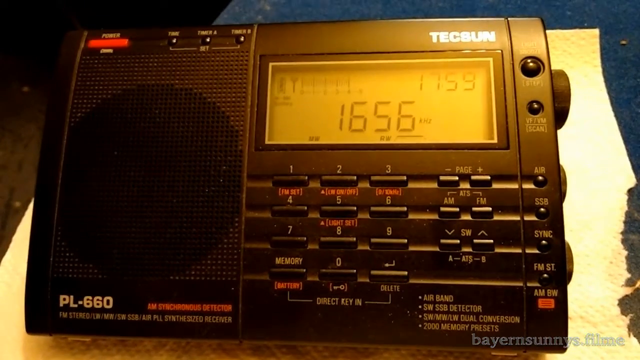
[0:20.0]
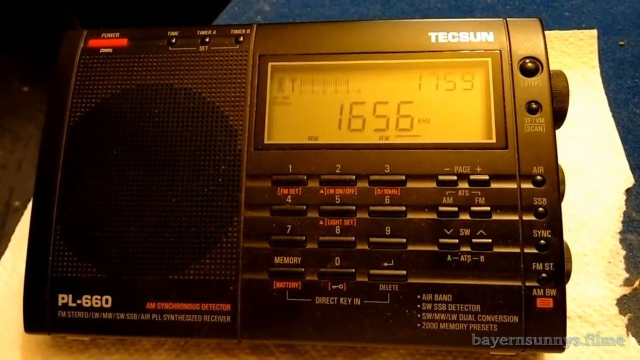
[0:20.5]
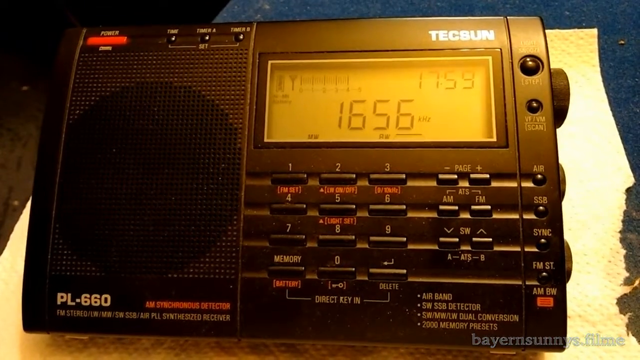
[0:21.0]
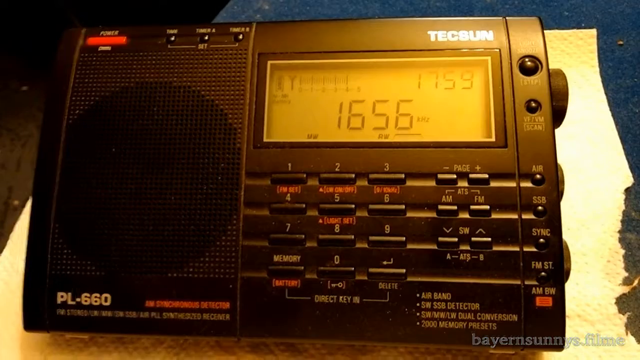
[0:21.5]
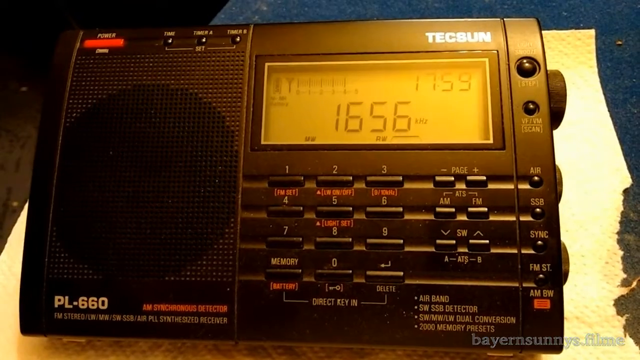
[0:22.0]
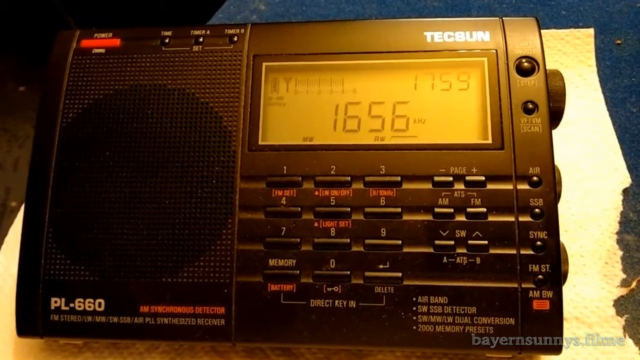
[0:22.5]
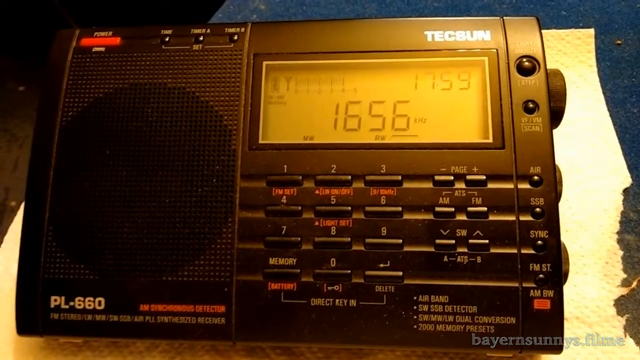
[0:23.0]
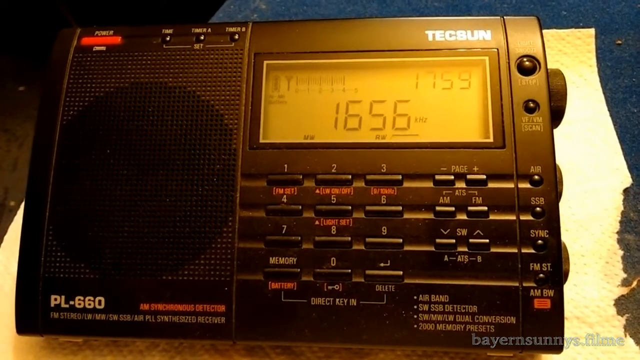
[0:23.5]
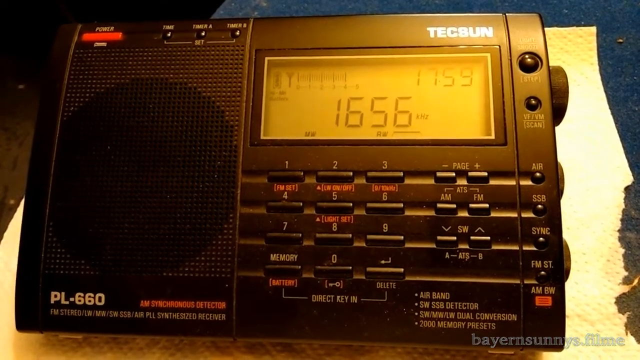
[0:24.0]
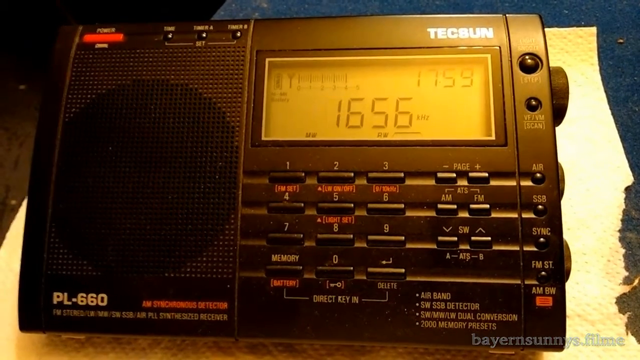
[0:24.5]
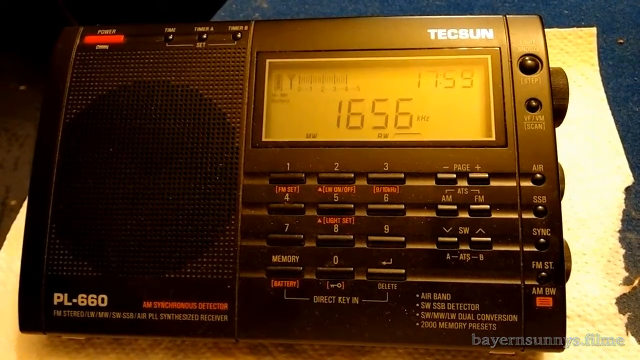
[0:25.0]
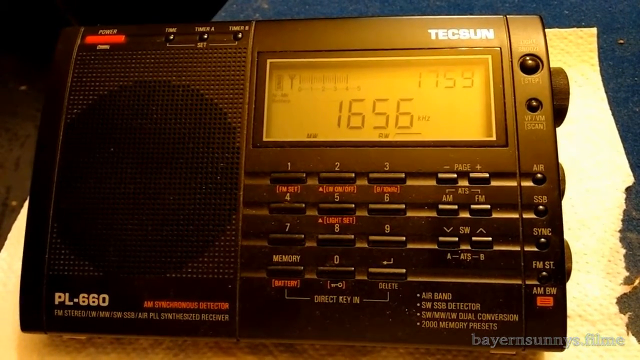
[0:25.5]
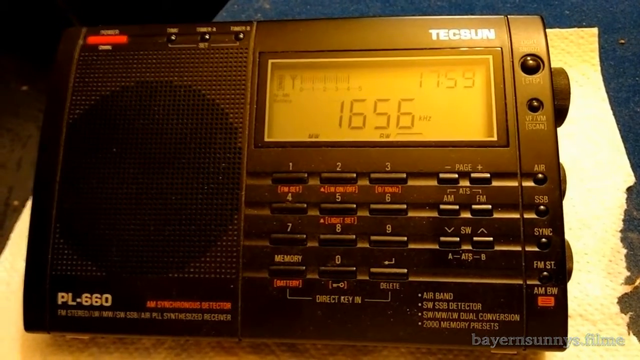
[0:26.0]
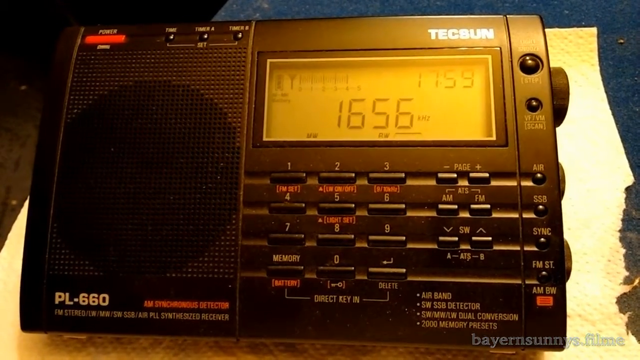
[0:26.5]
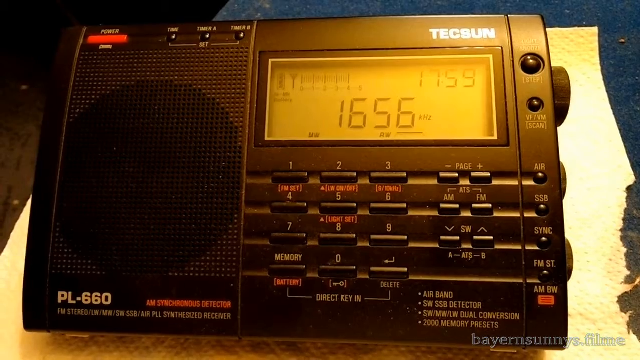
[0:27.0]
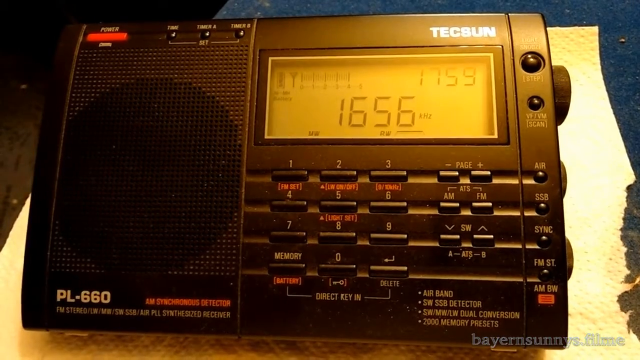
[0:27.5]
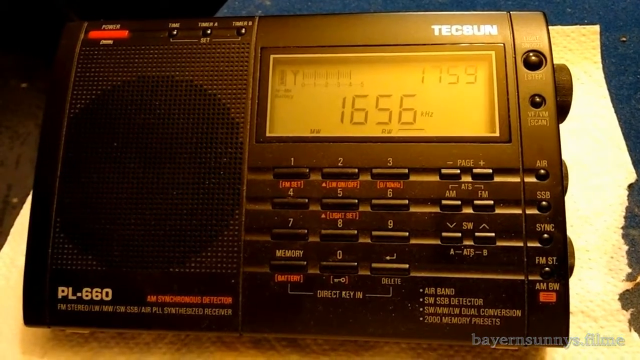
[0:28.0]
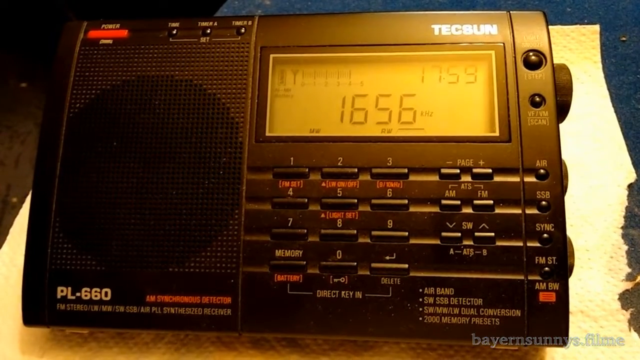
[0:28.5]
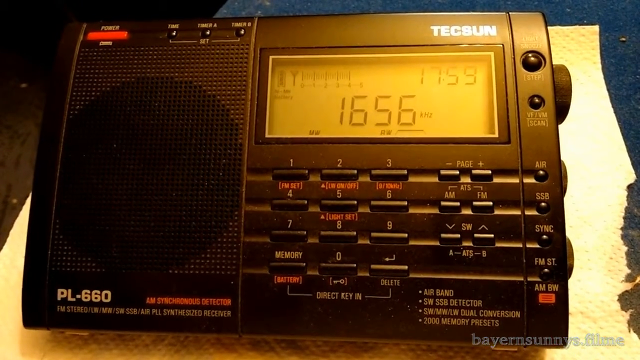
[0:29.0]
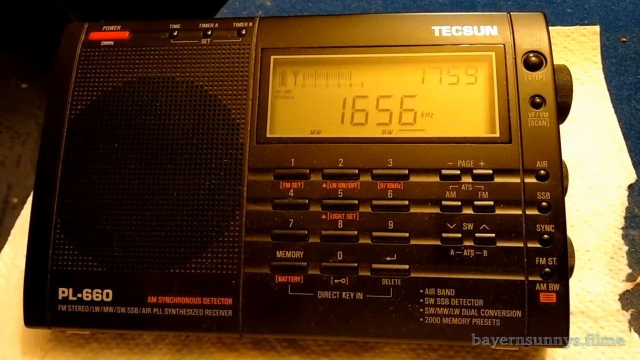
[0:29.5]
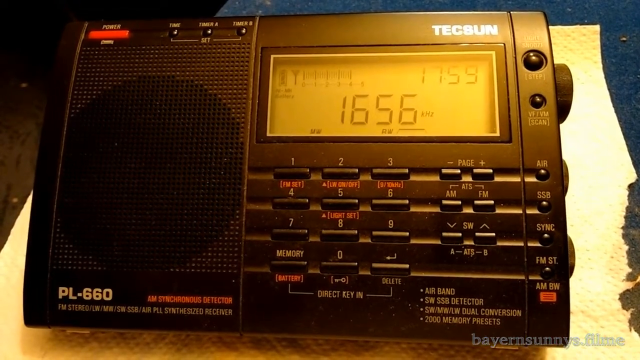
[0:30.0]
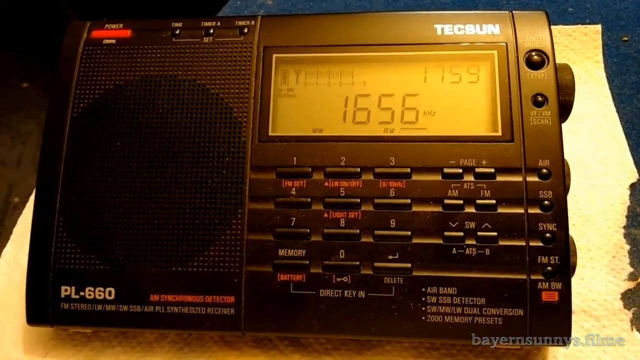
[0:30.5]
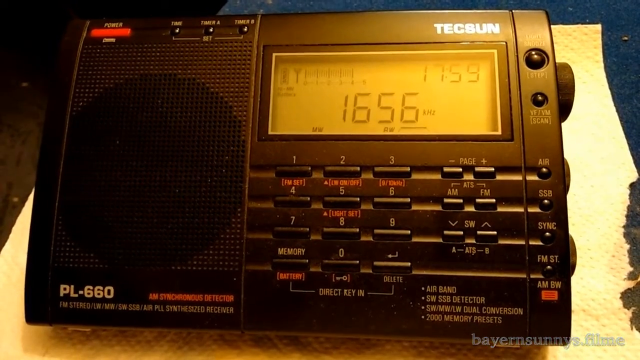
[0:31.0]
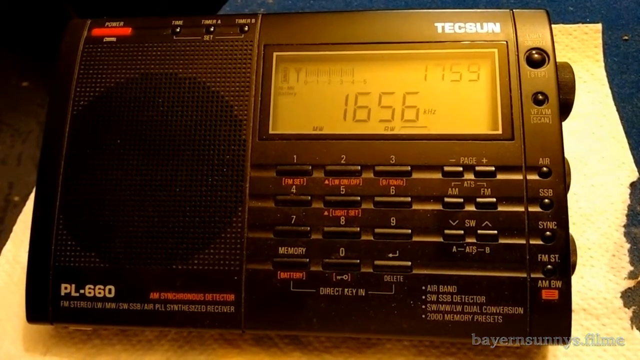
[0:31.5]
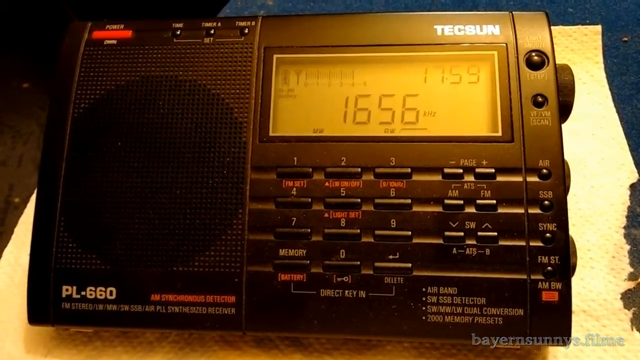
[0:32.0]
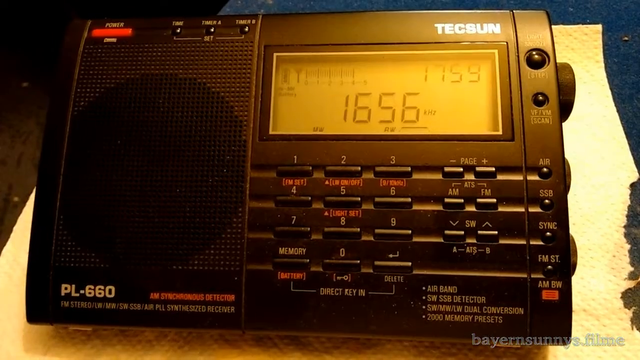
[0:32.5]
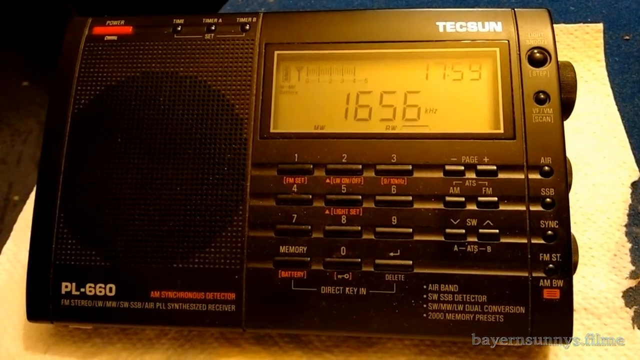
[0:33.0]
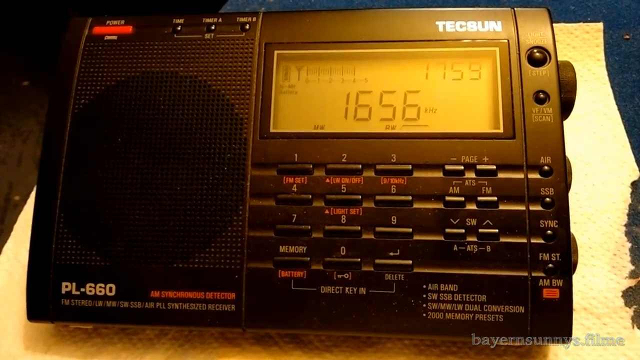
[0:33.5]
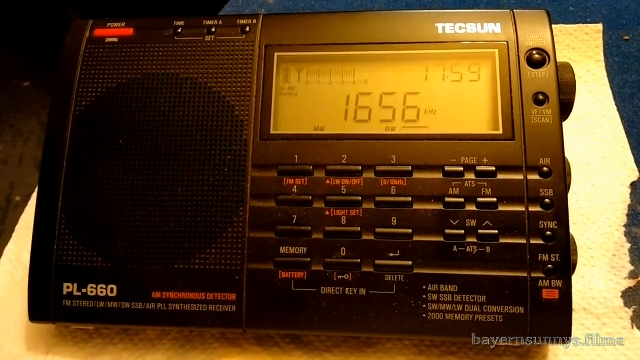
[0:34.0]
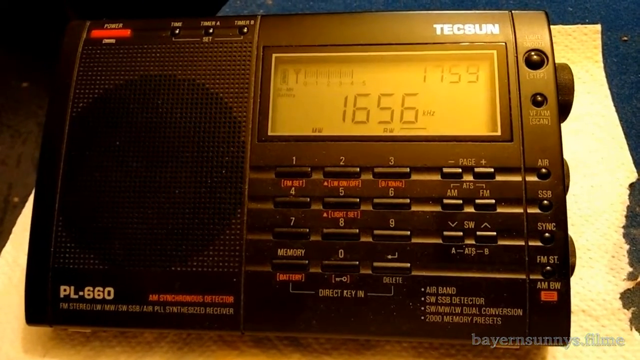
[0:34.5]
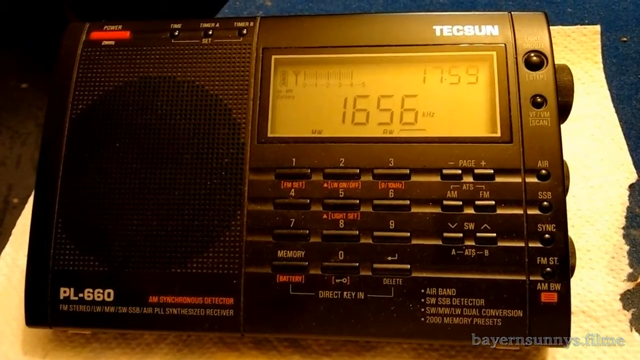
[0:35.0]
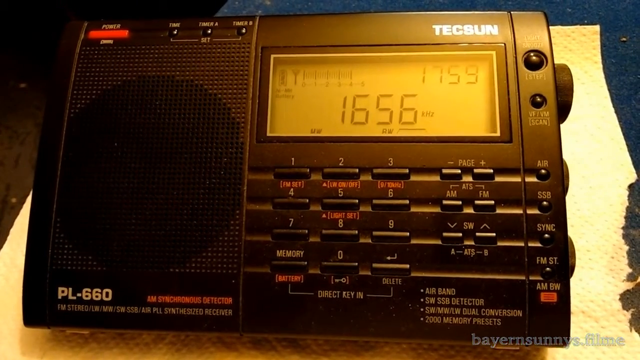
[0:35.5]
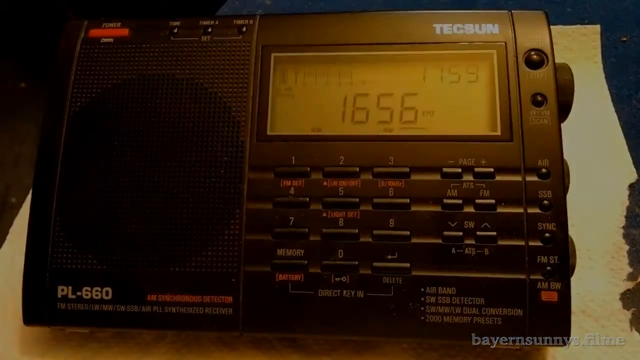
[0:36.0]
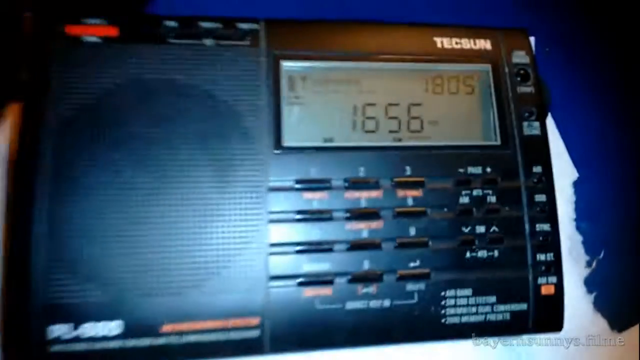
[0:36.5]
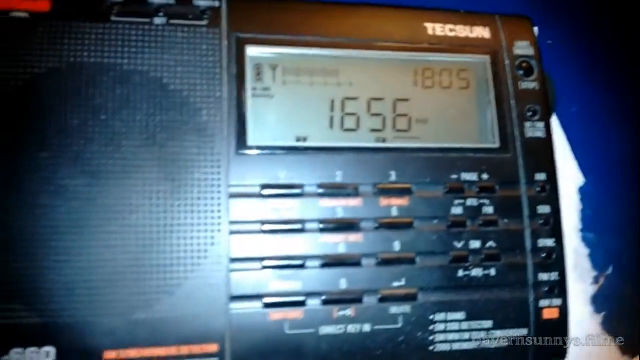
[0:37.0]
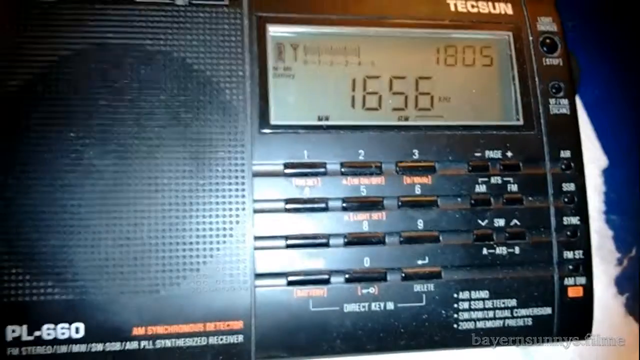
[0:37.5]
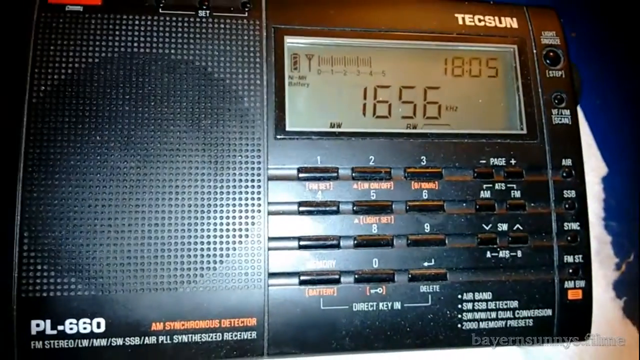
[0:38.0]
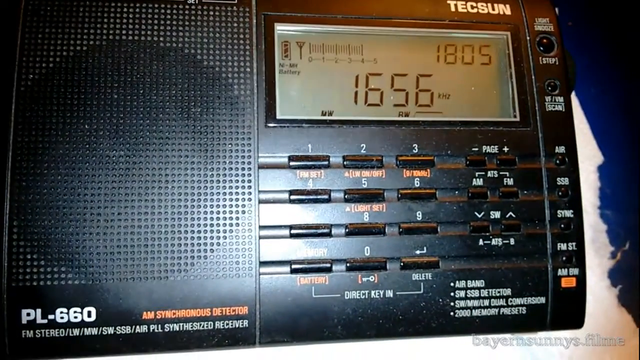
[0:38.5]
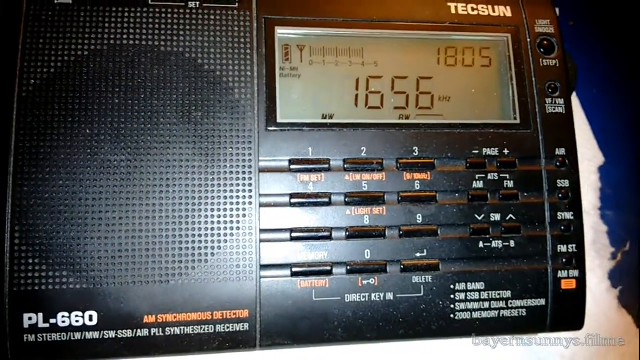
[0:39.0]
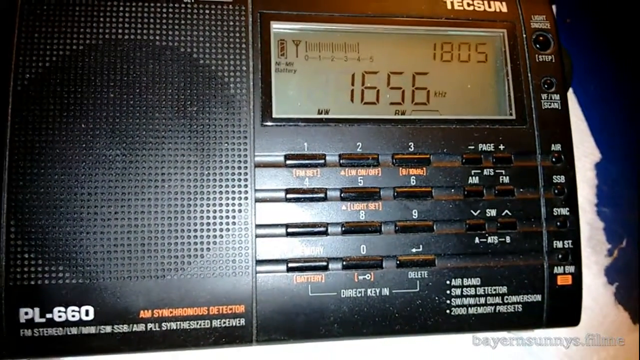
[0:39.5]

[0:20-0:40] A machine or device called an AM Synchronous Detector, model PL660, is shown. It is labeled as an "FM stereo LW" "PLL synthesized receiver." Other feature text reads "air band, SW SSB detector, SW MW LW dual conversion, 2,000 memory presets." On the front are number buttons 1, 2, 3, 4, 5, 6, 7, 8, 9 and 0, plus a memory button, a delete button, page number buttons, AM and FM buttons, and SW up and down arrows. A red power button is in the top left corner, along with a time button, a timer A button and a timer B button. The brand is Texan. The screen shows "1656HZ," with more numbers at the top reading "1759," and there are dials on the side of the device.